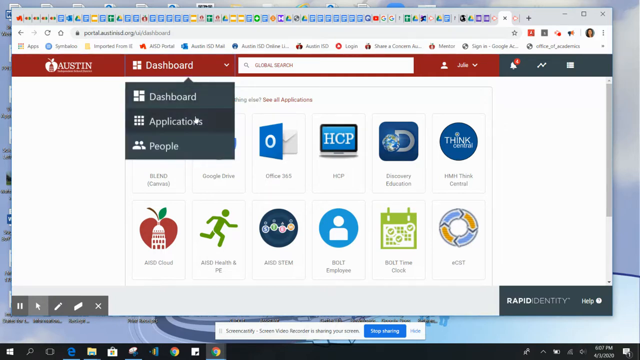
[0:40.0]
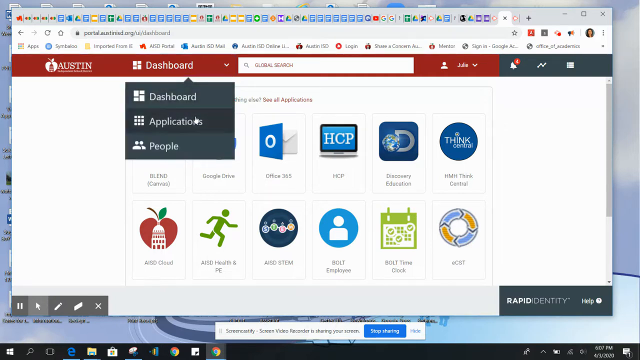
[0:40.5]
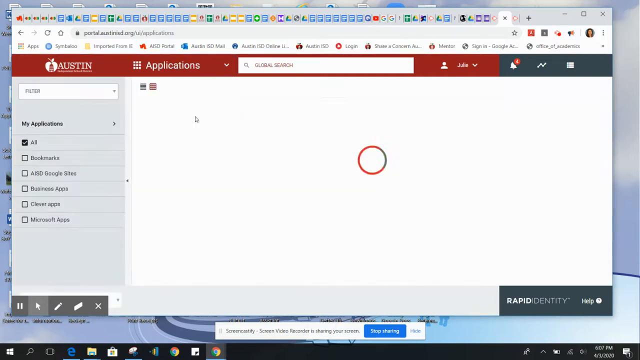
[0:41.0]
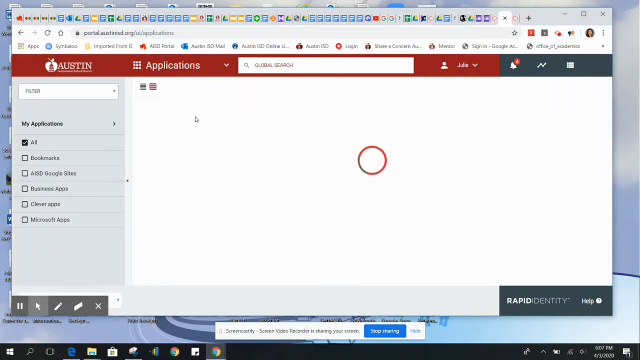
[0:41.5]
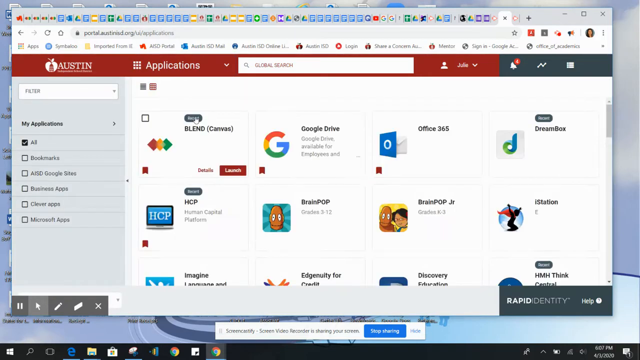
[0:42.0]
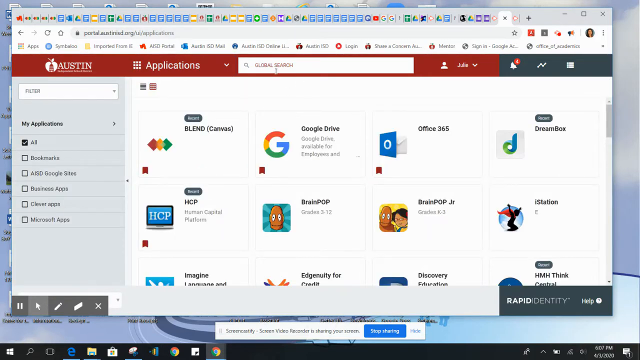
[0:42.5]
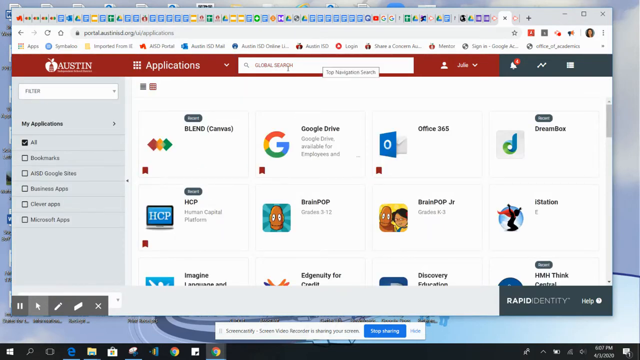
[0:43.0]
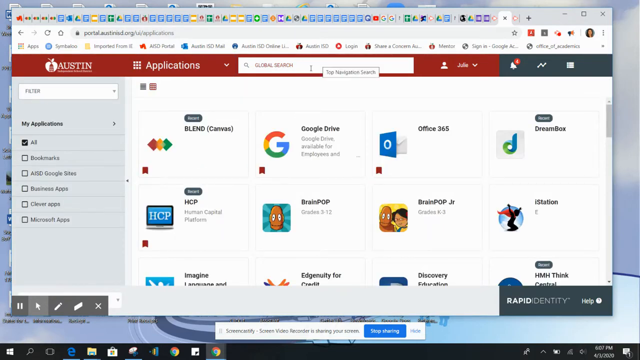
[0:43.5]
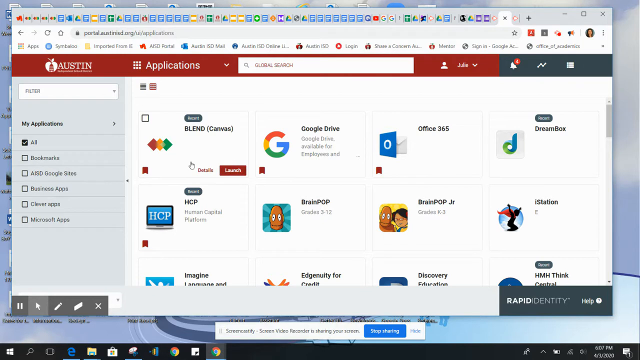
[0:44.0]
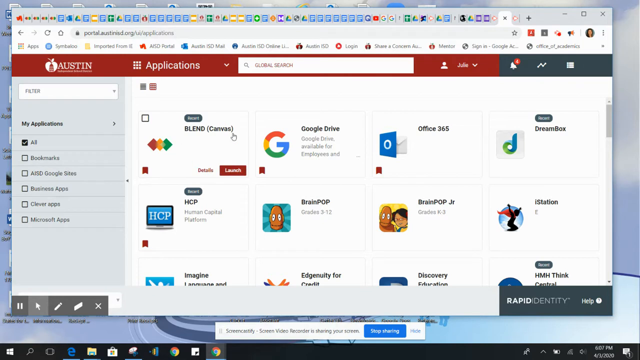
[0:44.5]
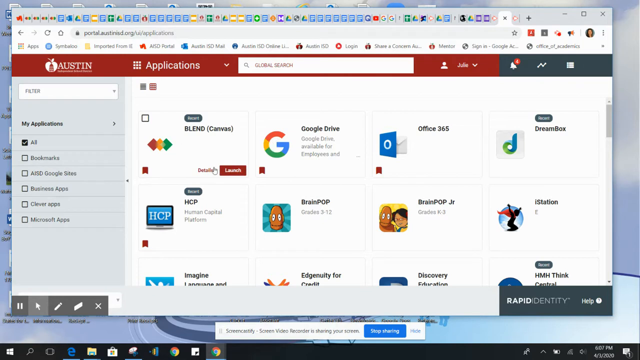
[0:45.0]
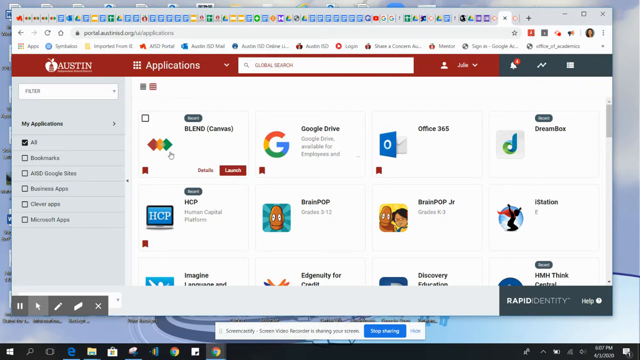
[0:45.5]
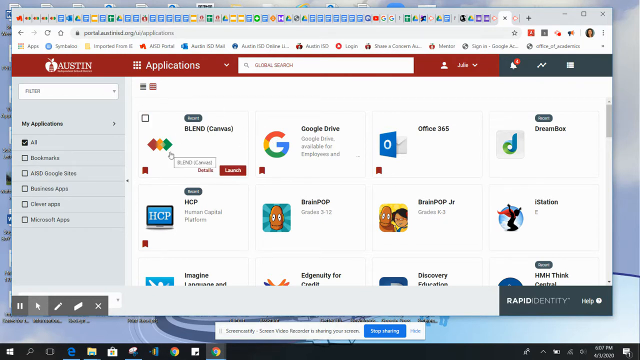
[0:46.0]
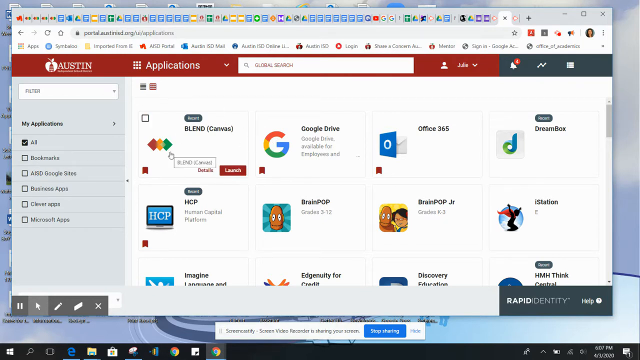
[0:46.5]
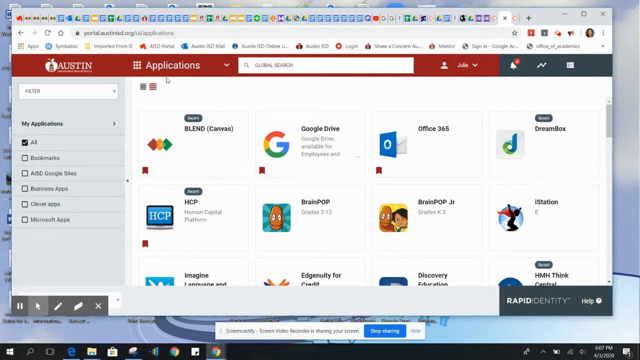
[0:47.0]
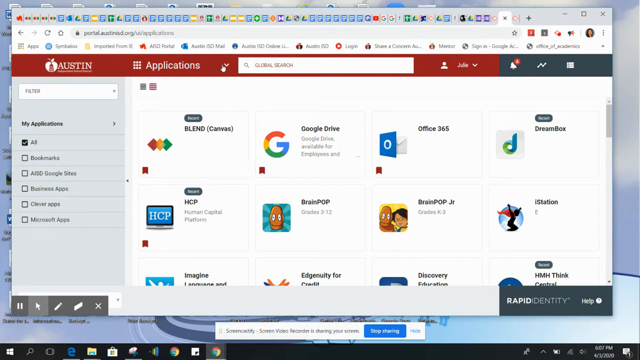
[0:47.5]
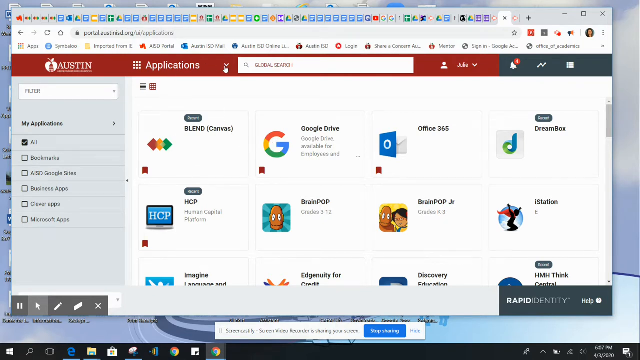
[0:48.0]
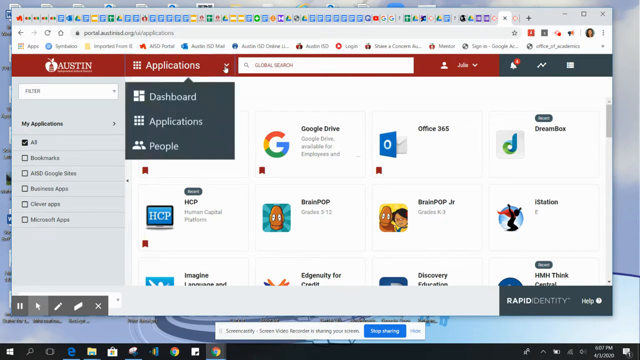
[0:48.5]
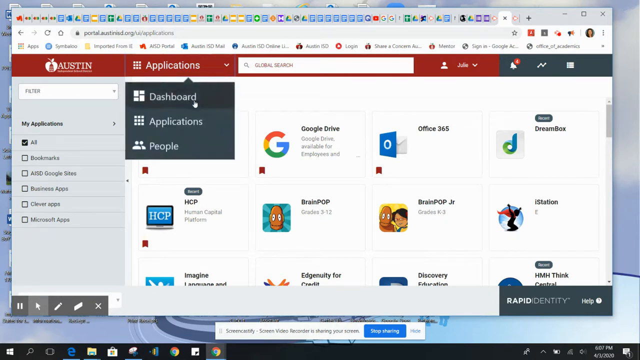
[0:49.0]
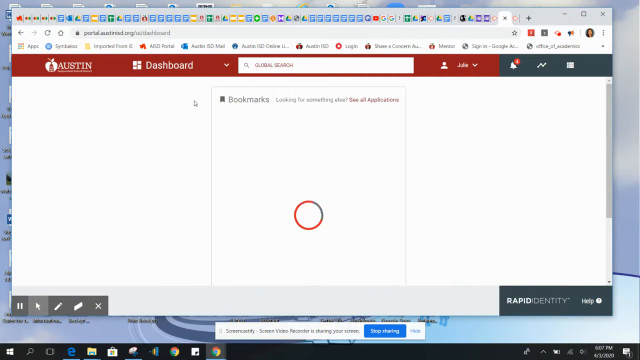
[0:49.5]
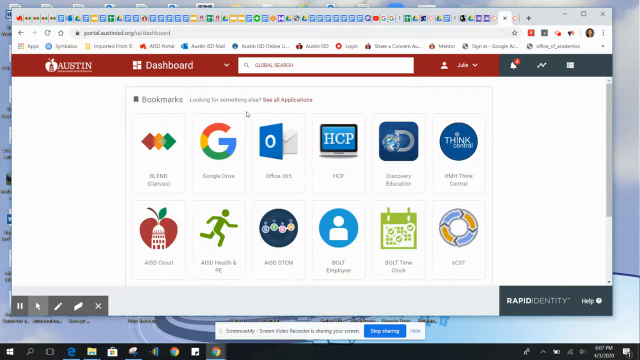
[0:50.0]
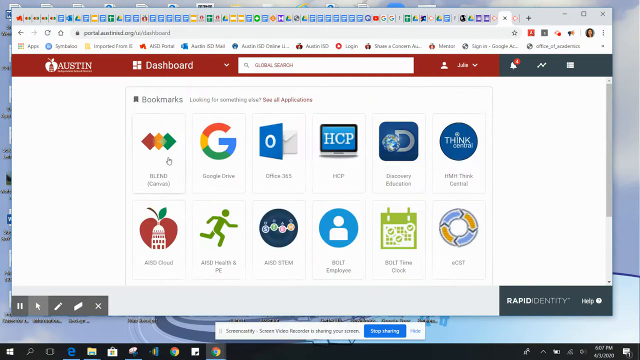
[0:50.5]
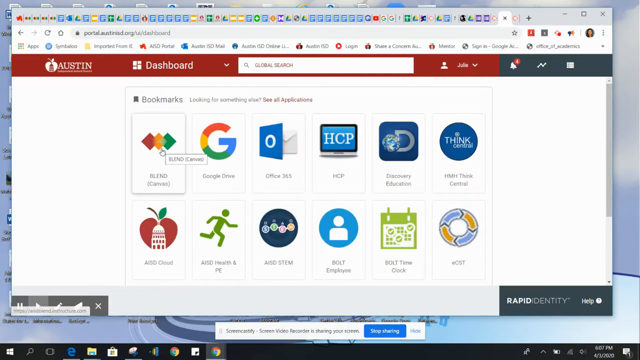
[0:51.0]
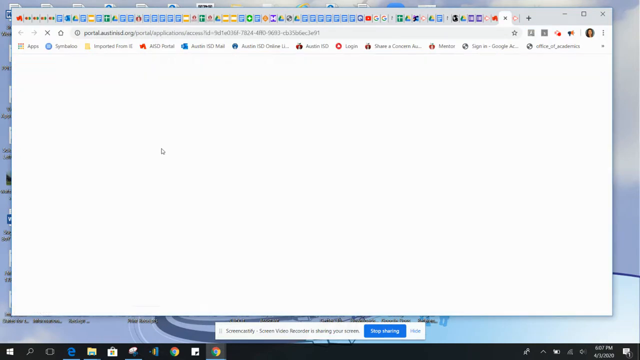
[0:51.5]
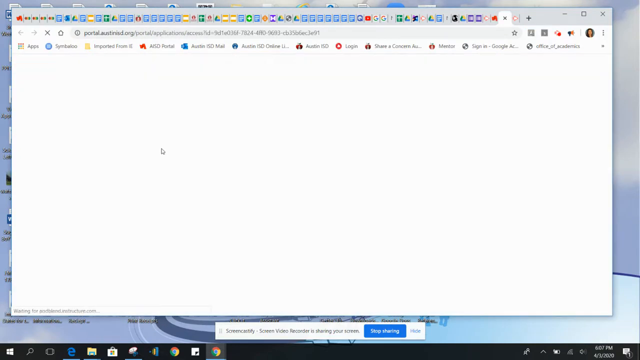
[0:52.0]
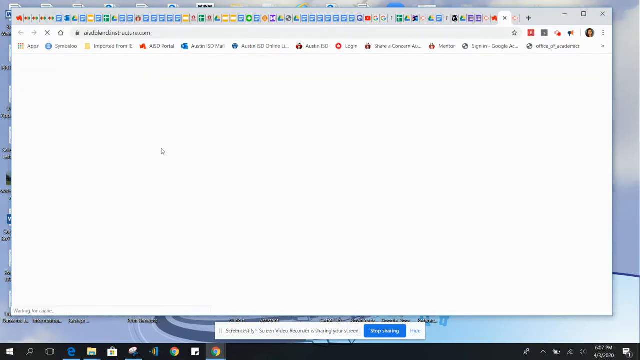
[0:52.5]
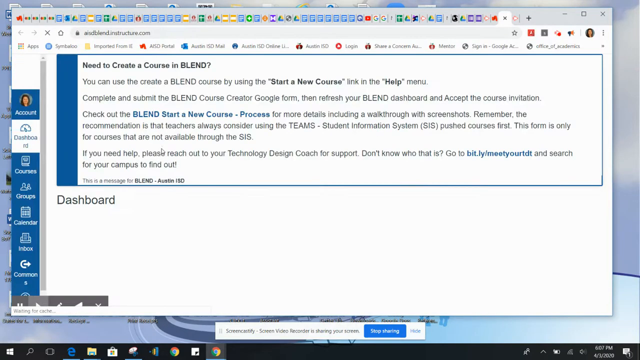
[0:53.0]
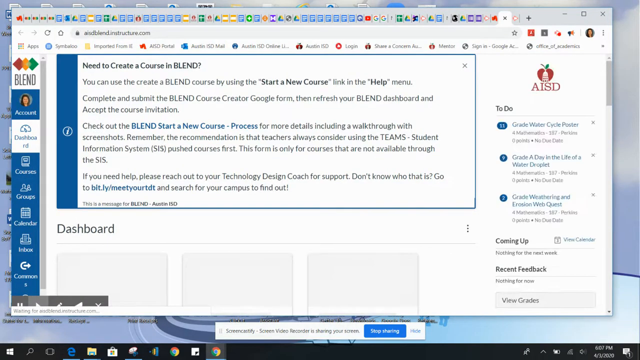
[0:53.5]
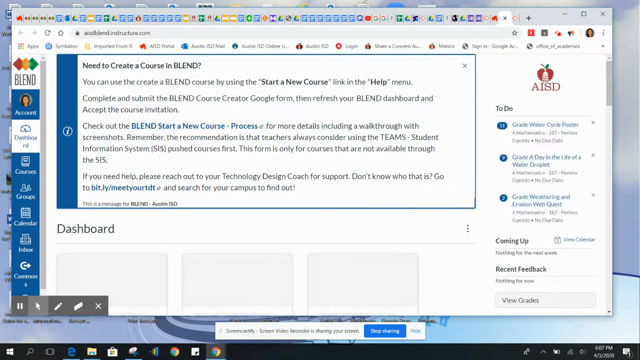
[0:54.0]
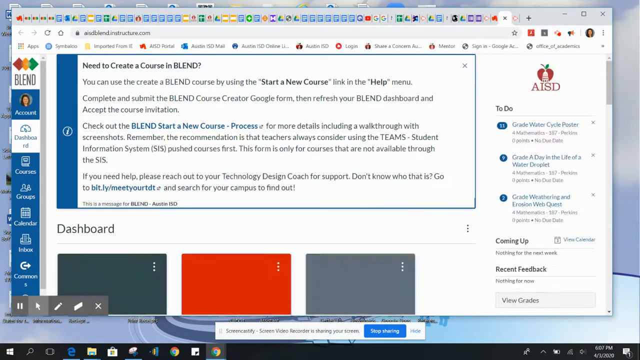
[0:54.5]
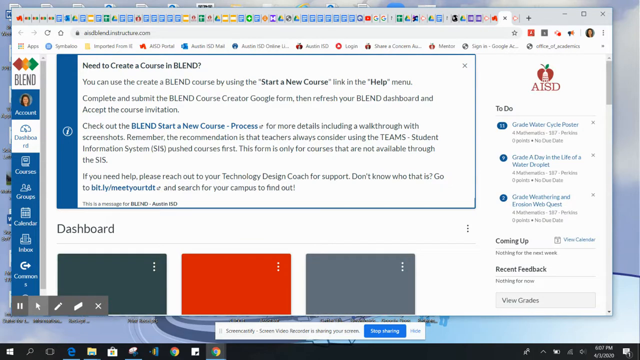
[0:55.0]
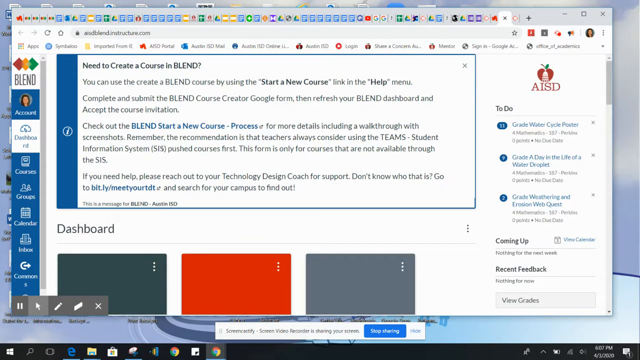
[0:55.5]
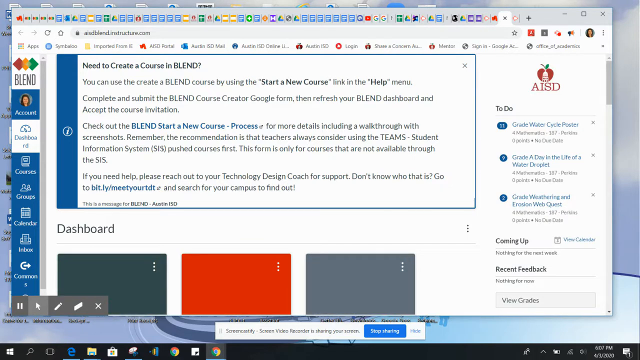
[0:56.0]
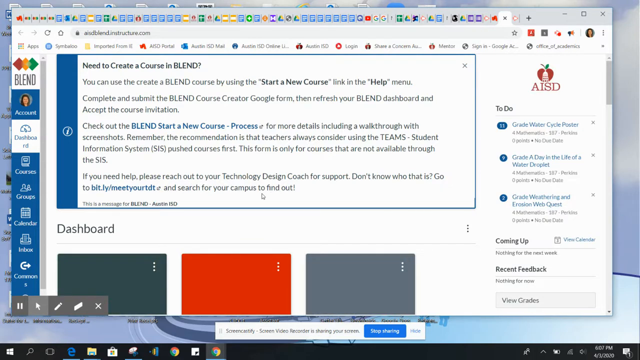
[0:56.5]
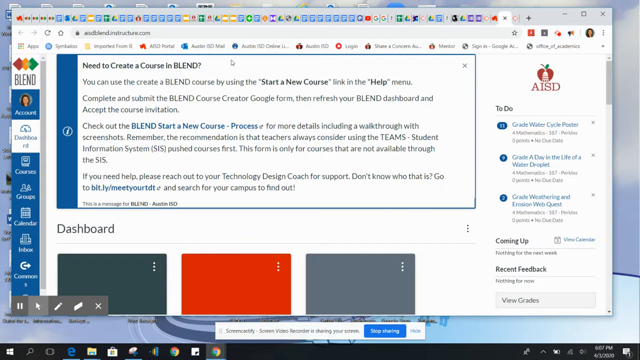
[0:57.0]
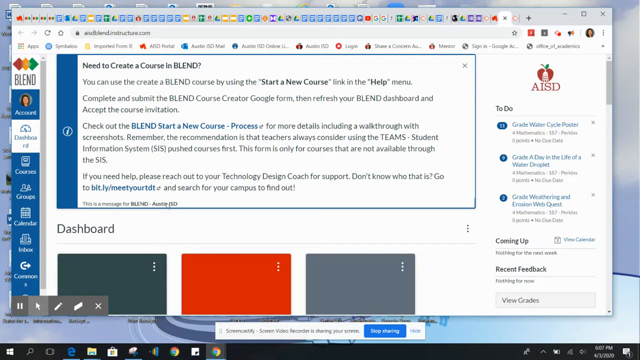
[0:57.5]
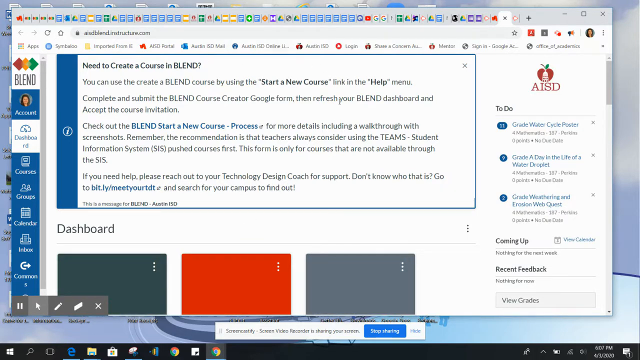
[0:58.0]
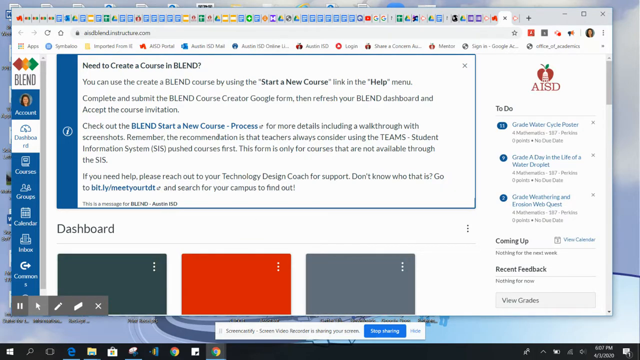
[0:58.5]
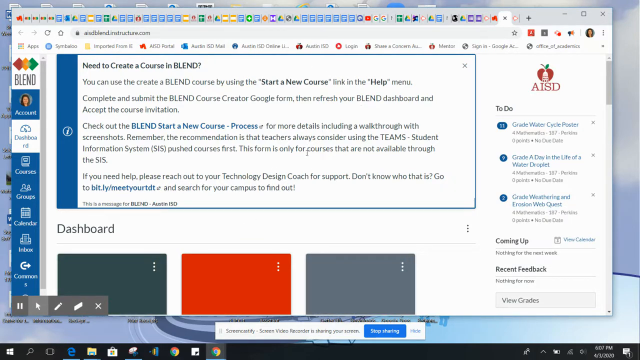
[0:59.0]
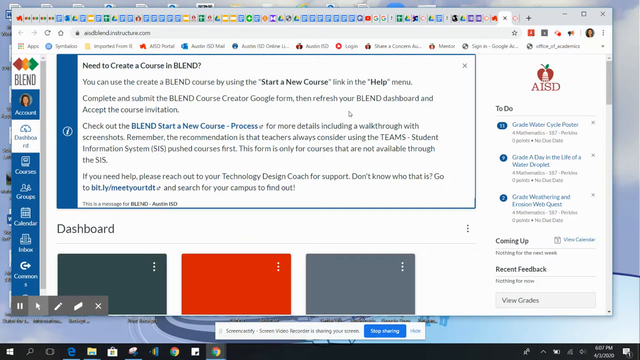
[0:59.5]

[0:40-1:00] On the custom page, the user clicks the dashboard dropdown, which has three options: dashboard, applications, and people. Clicking applications leads to a new page with many options, including many of the shortcuts from the previous page, now shown as bigger tiles, with half of them missing icons. A check box appears on a tile when it is hovered over. The mouse moves up over the search bar, which shows "global search" in red. On the left side it says "my applications", and below that are six options with check marks next to them; only one, for all, is filled in. The others are bookmarks, google sites, business apps, clever apps, and microsoft. The user hovers over the blend canvas option, the first option, then goes back up to the dashboard dropdown and returns to the dashboard. They click Canvas through the dashboard, and it opens Canvas in a new tab. The Blend Canvas page looks like a homework page for managing assignments for Austin University. At the very top of this page is a message about how to create a course in Blend by starting a new course, so it seems to be a professor teaching people how to make courses in Canvas. On the left side are options including dashboard, courses, groups, calendar, inbox, and common.